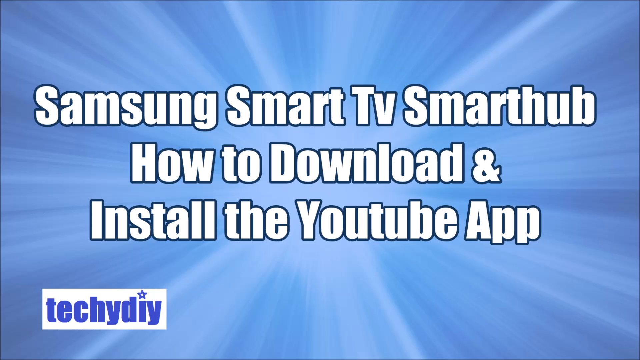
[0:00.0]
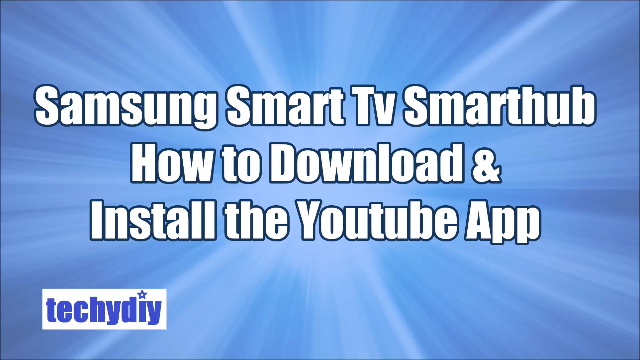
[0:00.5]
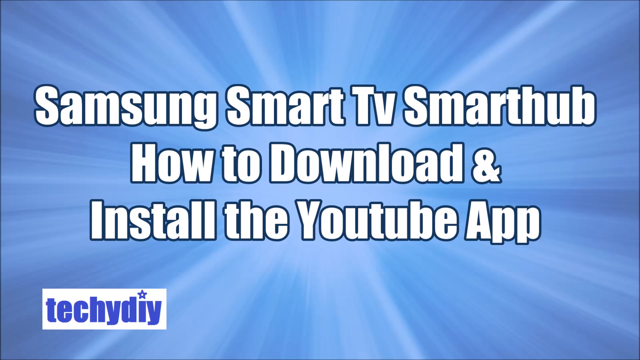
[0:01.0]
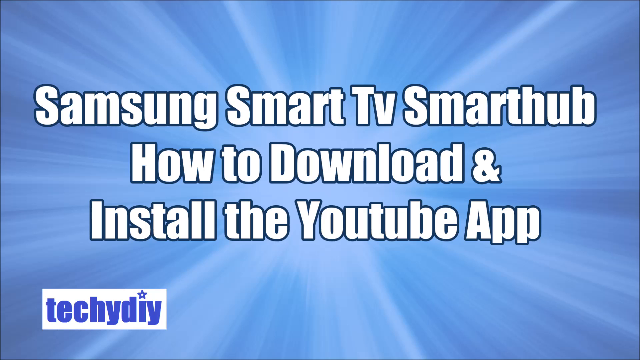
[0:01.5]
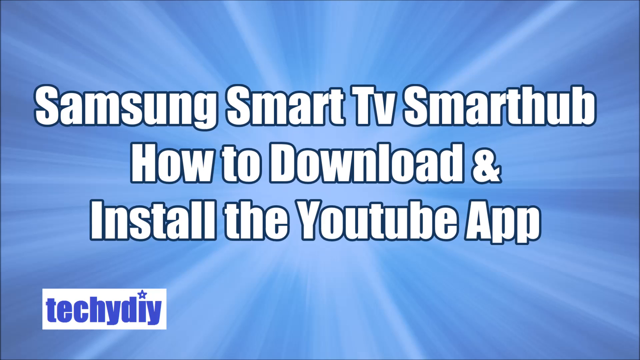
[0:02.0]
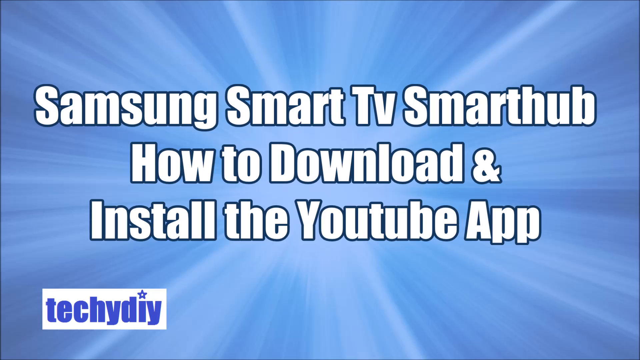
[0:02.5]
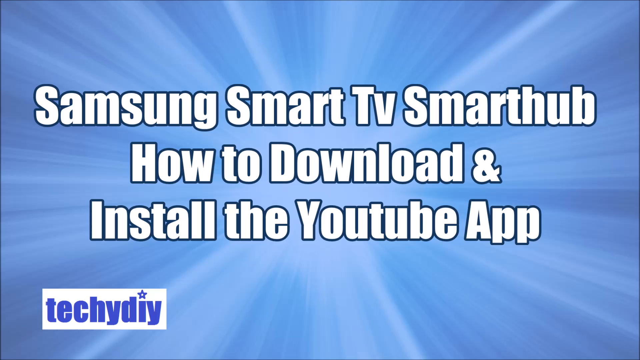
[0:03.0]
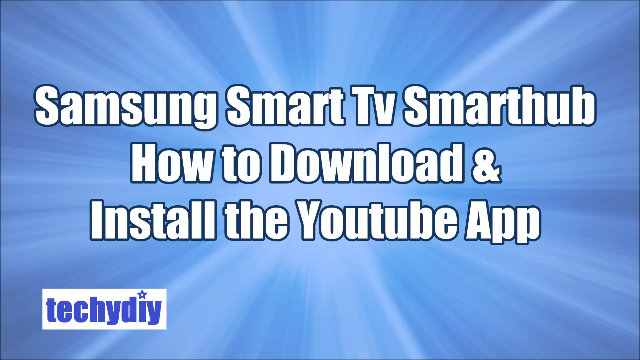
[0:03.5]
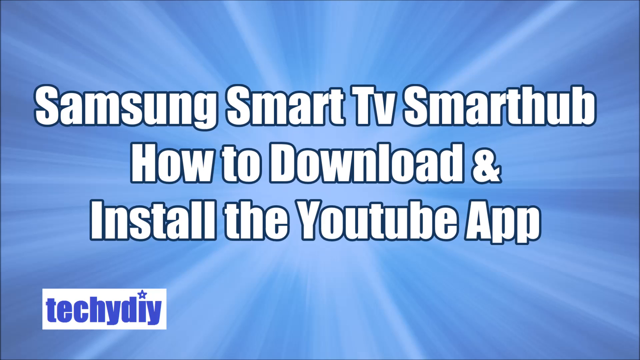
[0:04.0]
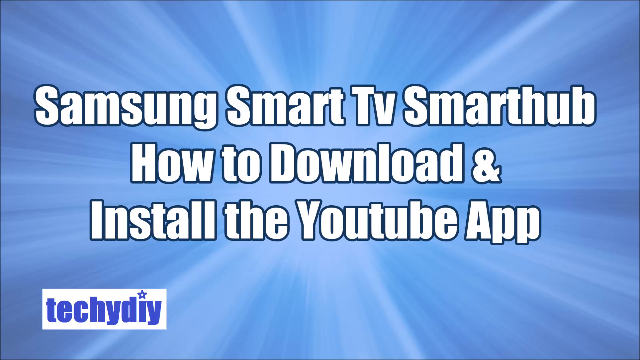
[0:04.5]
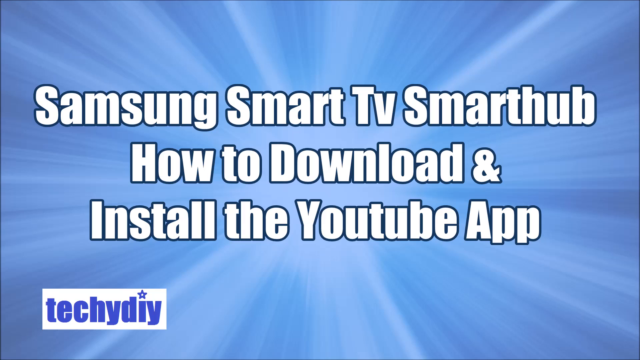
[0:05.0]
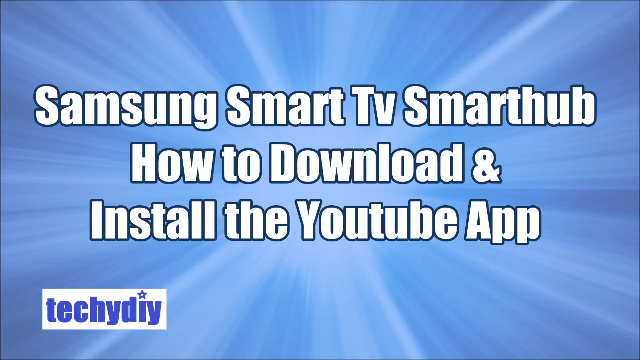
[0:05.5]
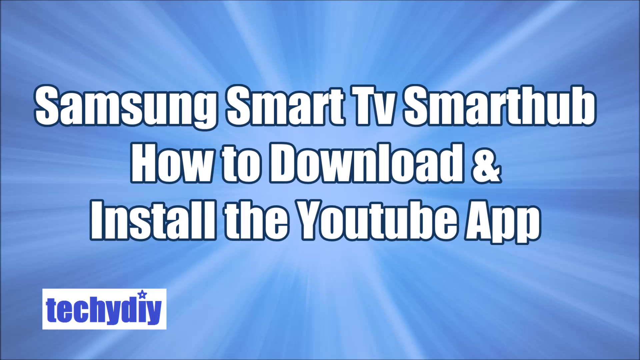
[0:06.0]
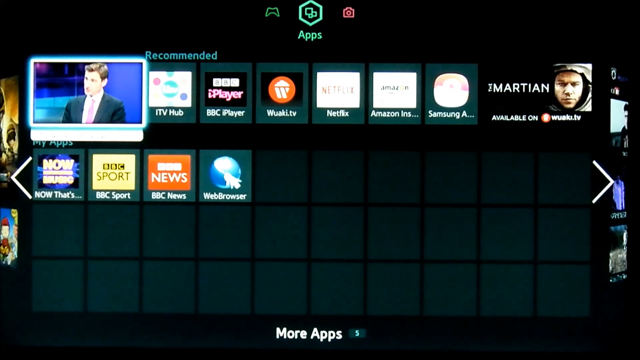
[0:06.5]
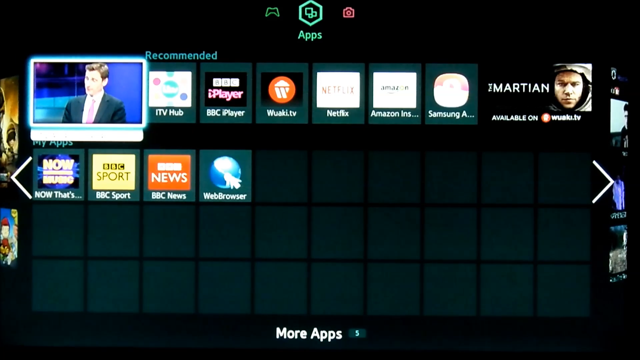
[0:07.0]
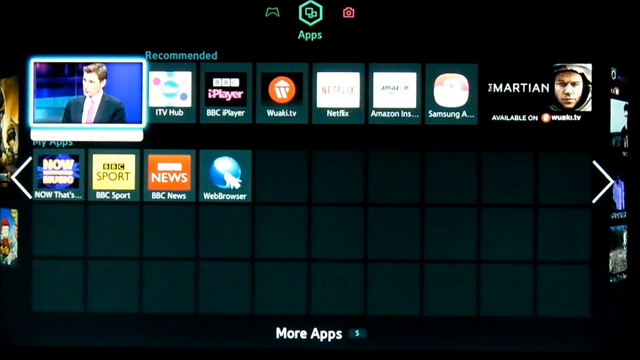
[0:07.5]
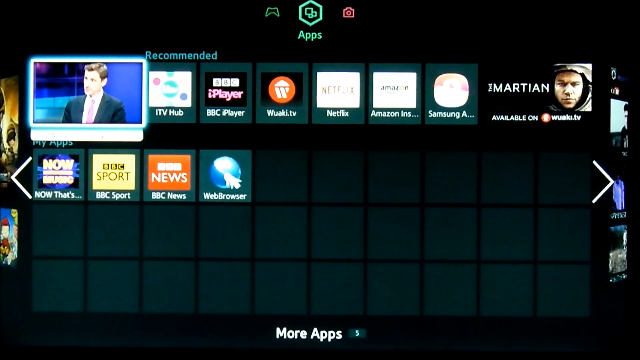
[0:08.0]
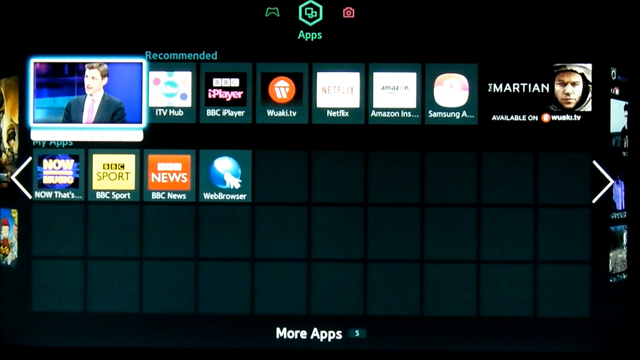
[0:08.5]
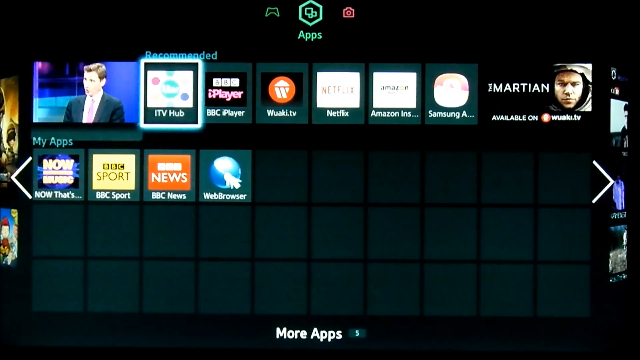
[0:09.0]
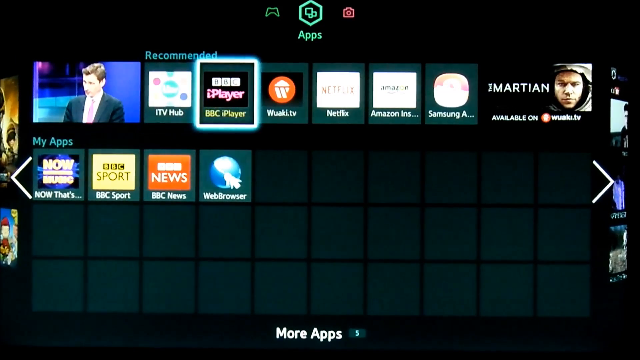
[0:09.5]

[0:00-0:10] A blue screen shows what looks like rays of white light radiating from the centre. White lettering across the centre reads "Samsung Smart TV Smart Hub how to download and install the YouTube app", and in the bottom left-hand corner a white box holds the logo "Techie DIY" in blue lettering, with the dot of the i drawn as a star. The next screen is black and appears to be a smart TV screen, with different apps in little windows, such as ITV Hub, BBC iPlayer, Netflix, Amazon and BBC News.